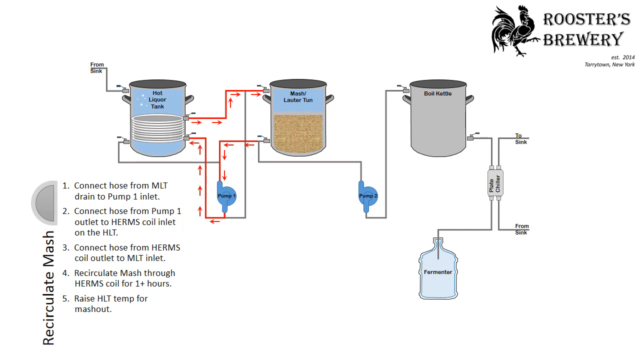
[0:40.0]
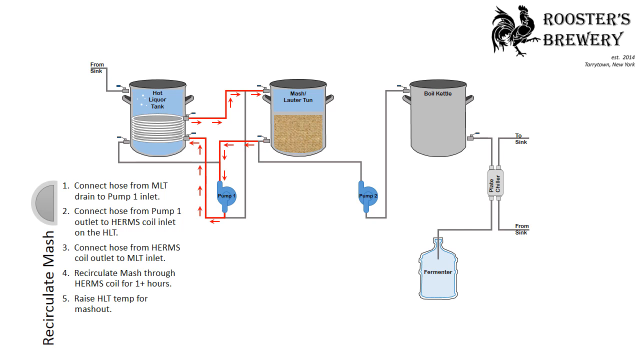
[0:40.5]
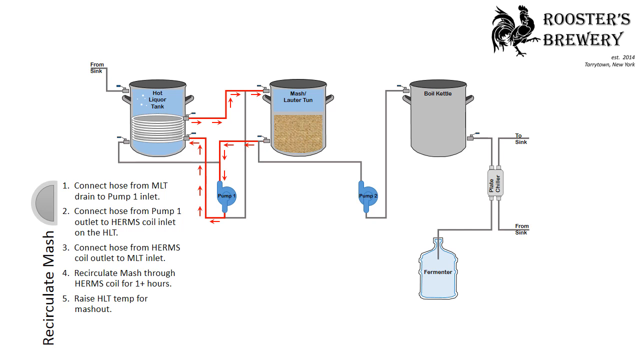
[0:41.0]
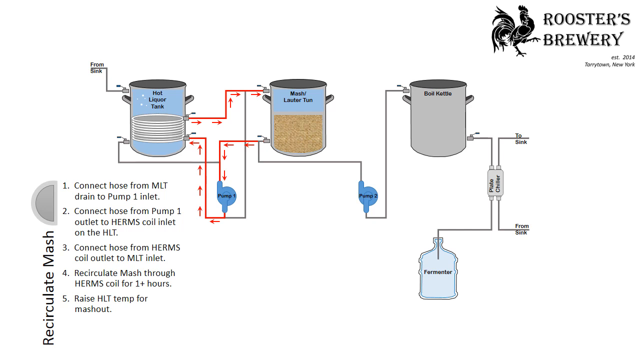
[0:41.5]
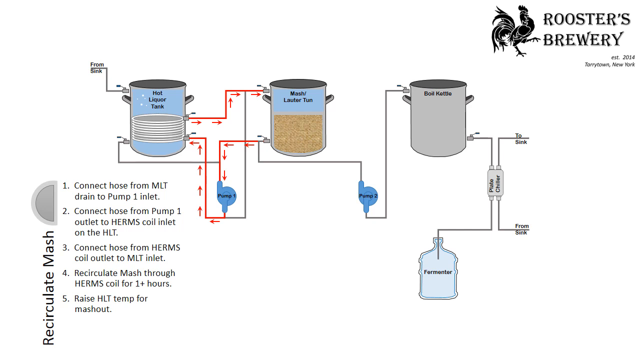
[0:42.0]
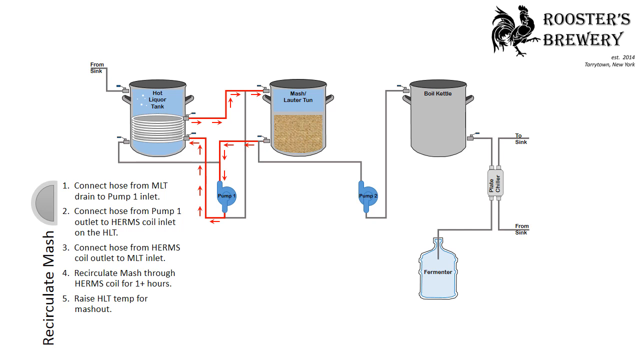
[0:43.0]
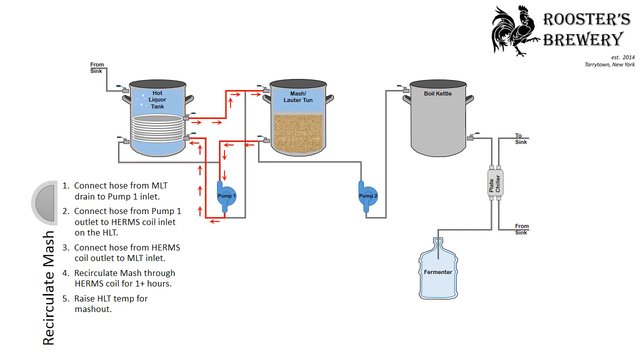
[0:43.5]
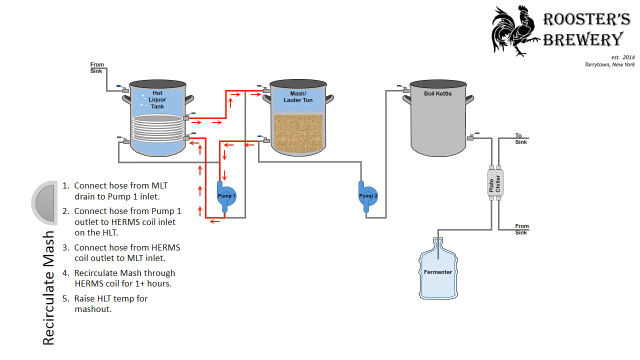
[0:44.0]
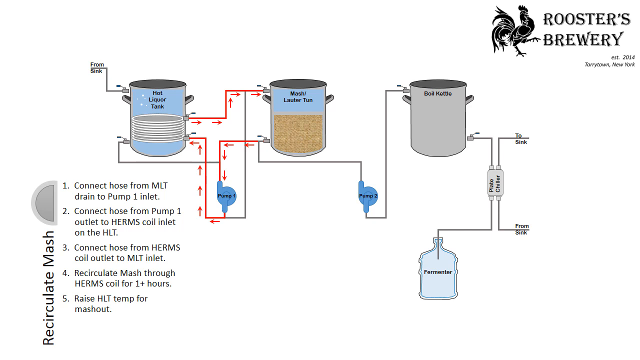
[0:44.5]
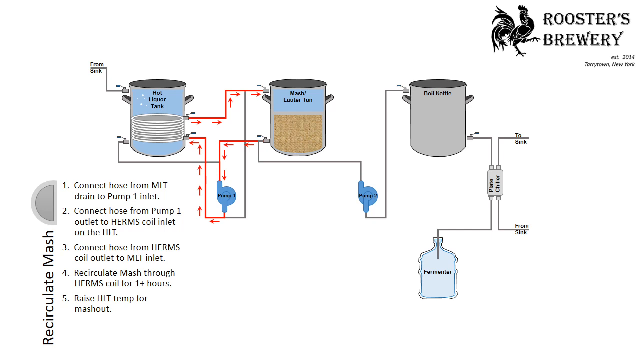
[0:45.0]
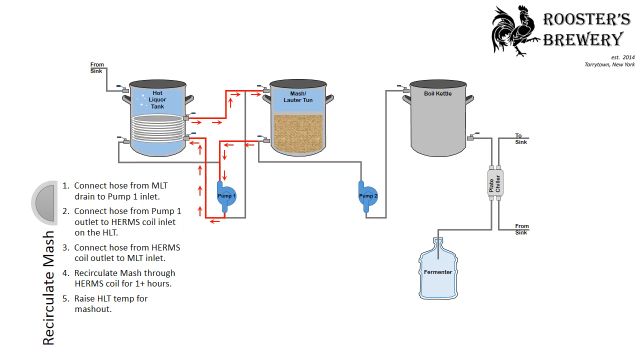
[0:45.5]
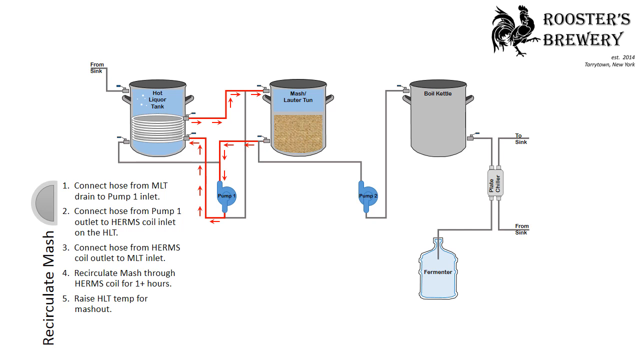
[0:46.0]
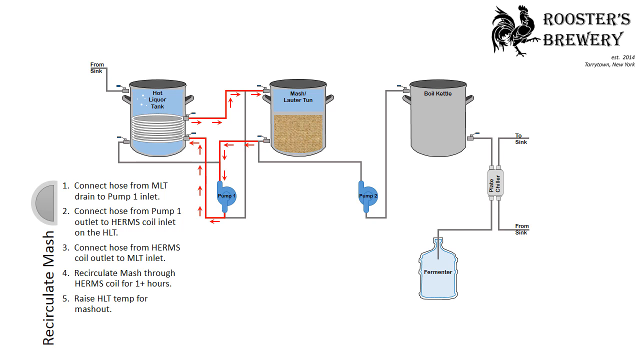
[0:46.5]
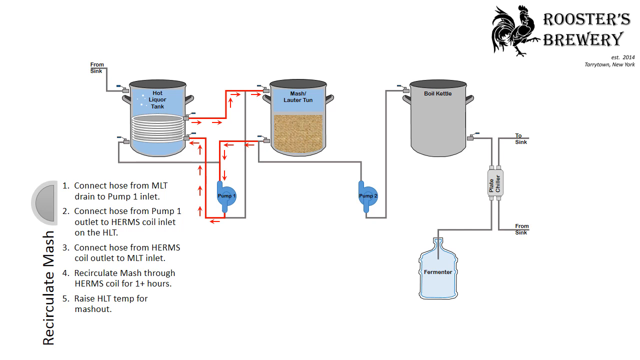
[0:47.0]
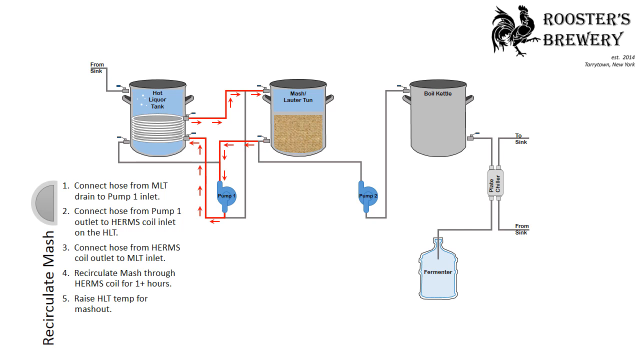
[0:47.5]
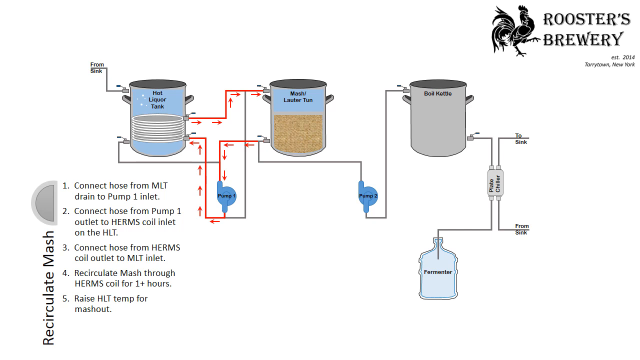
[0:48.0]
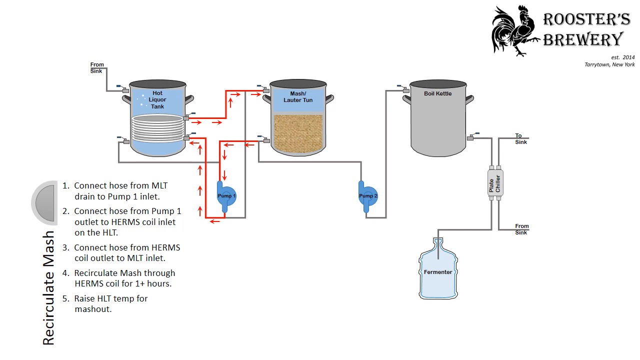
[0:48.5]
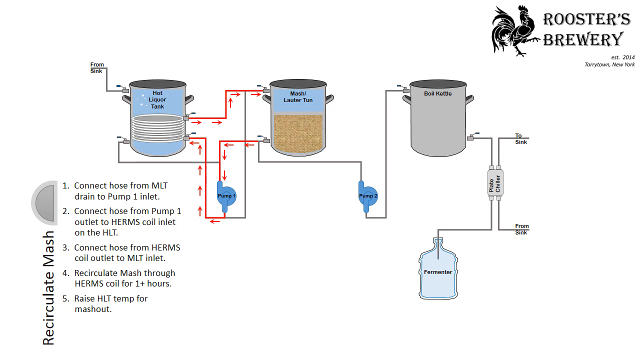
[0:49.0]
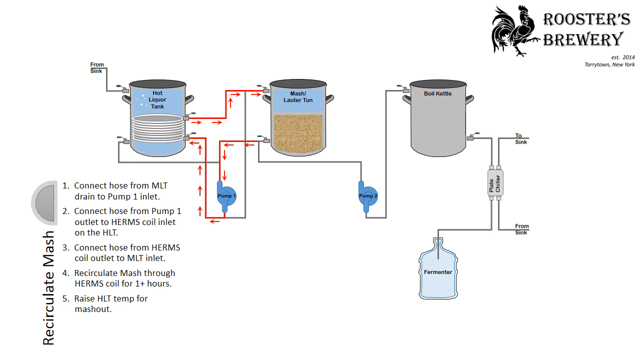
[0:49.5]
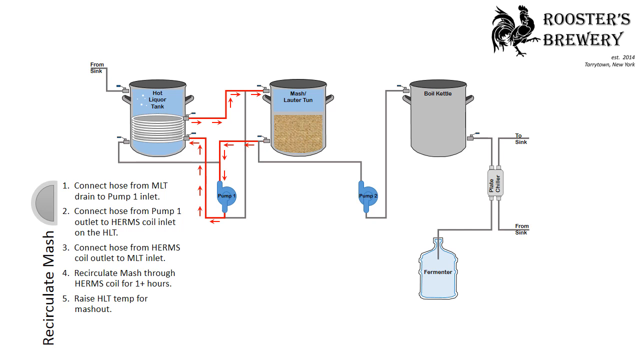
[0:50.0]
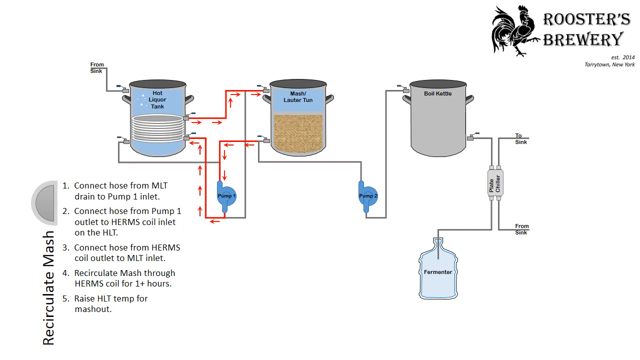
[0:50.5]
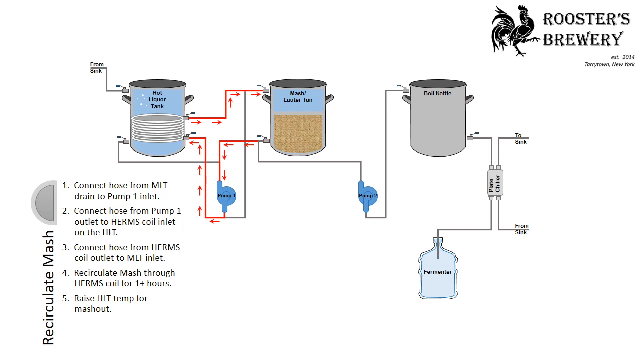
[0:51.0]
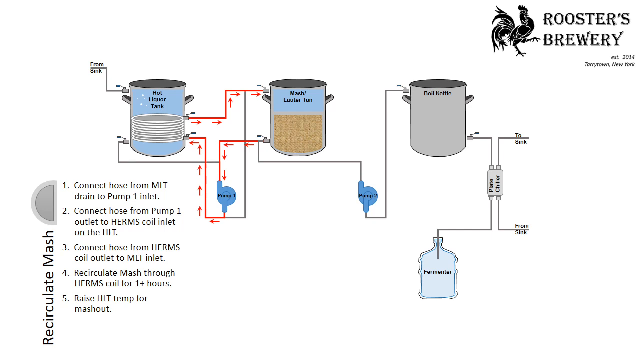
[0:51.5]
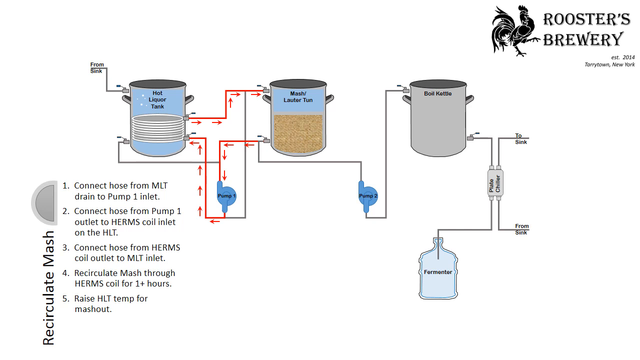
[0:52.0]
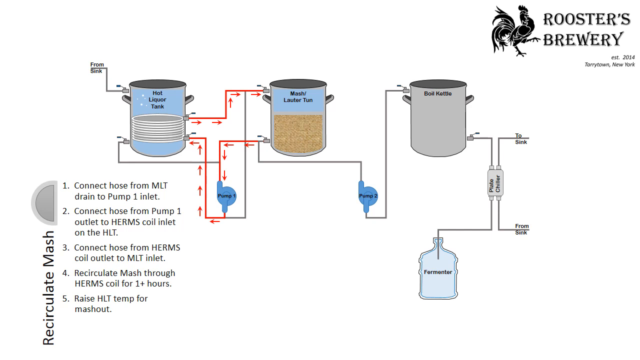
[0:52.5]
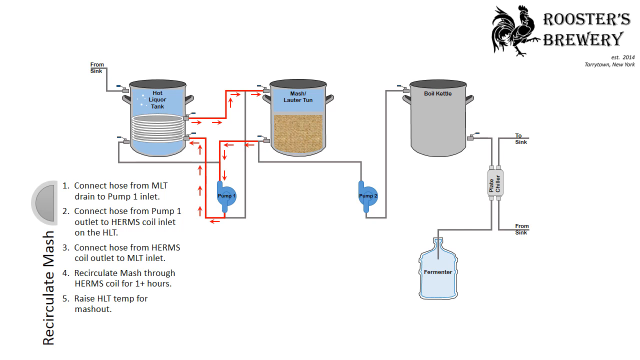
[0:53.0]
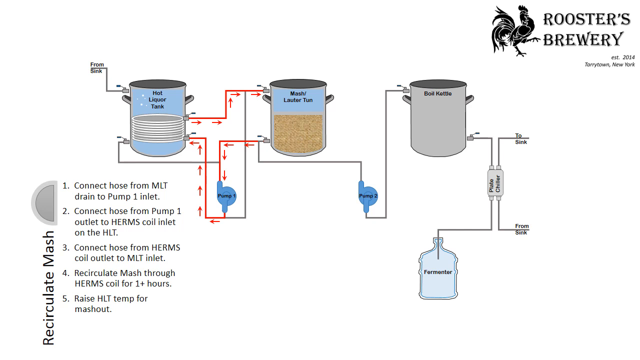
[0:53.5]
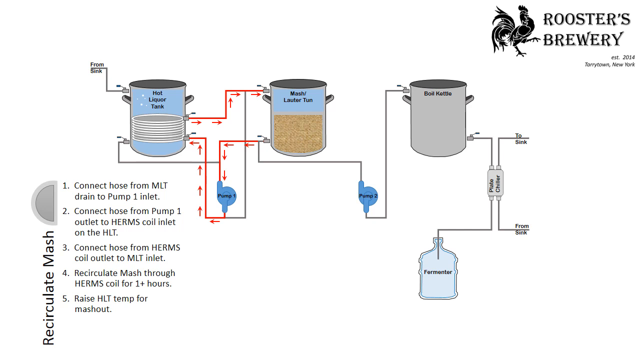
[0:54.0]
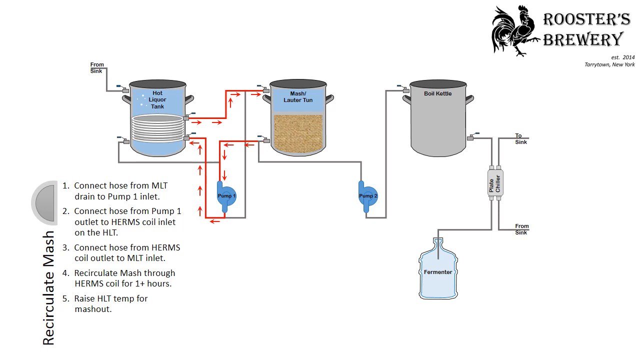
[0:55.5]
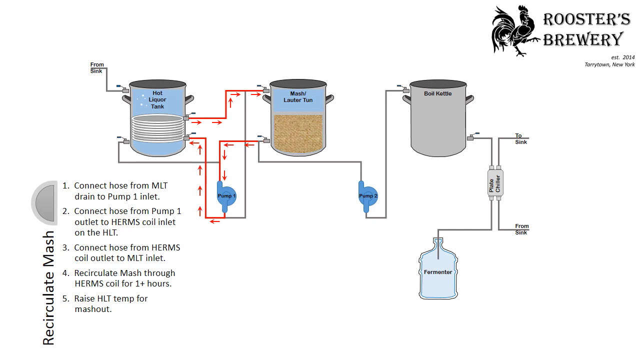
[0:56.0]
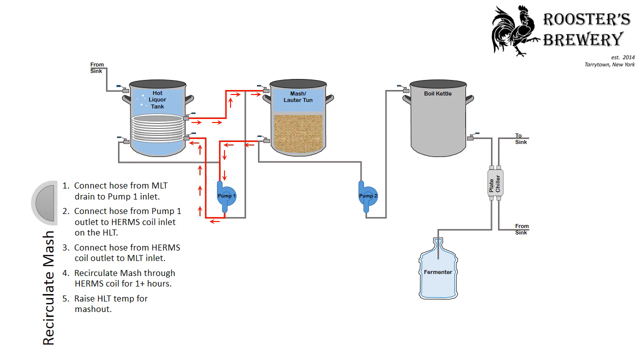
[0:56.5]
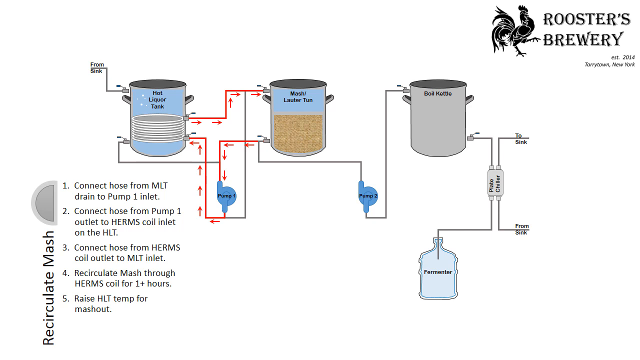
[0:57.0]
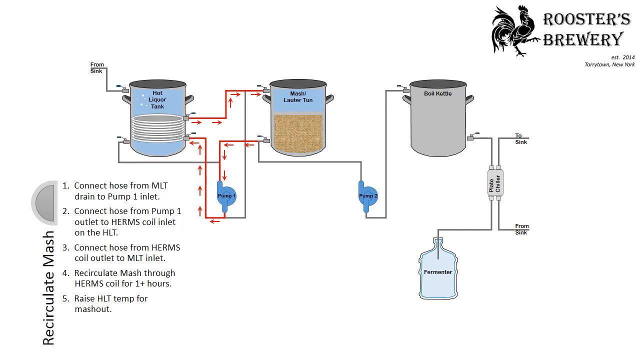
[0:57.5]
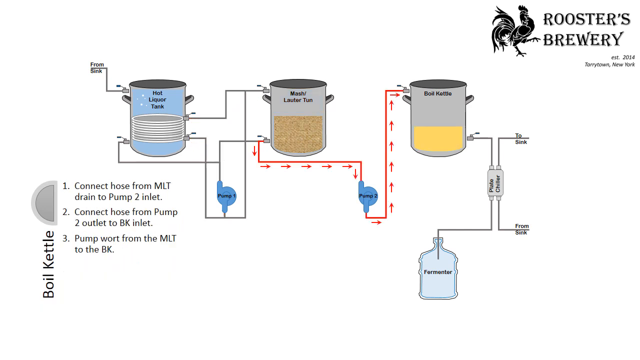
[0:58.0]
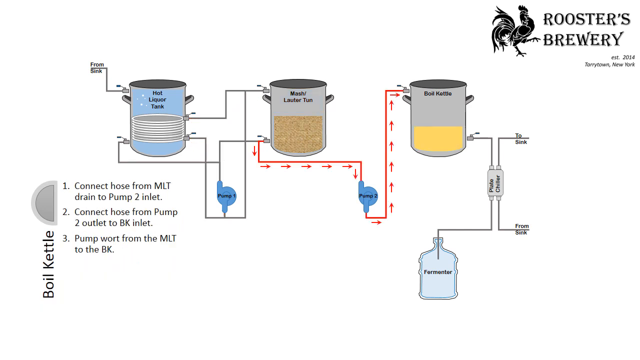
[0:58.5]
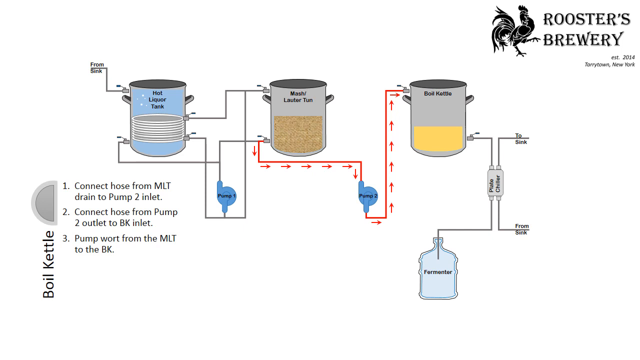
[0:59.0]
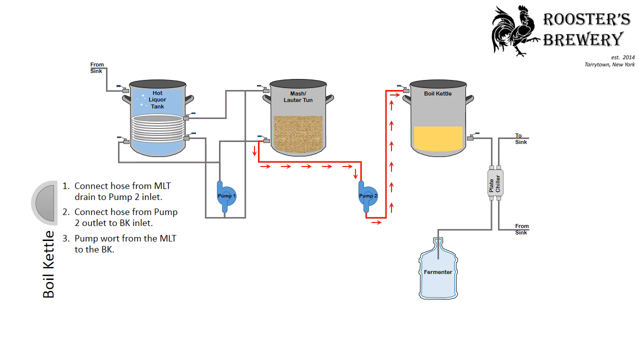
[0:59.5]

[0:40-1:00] More steps appear for the same system. The hose goes from the MLT, the second pot, to the pump 1 inlet, and then from the pump 1 outlet to the Hermes coil inlet on the right side of the HLT. Step 3 reads "connect hose from Hermes coil outlet to MLT inlet", shown as a connection from the upper right side of the HLT to the second pot. Step 4 is to recirculate through the Hermes coil for "1 plus hours." Next, an output on the lower left part of the second kettle connects to the second pump and goes to the third kettle. These steps read "connect hose from MLT drain to pump 2 inlet" and "connect hose from pump 2 outlet to BK inlet", and a third step is to pump from the MLT to the BK, the boil kettle.